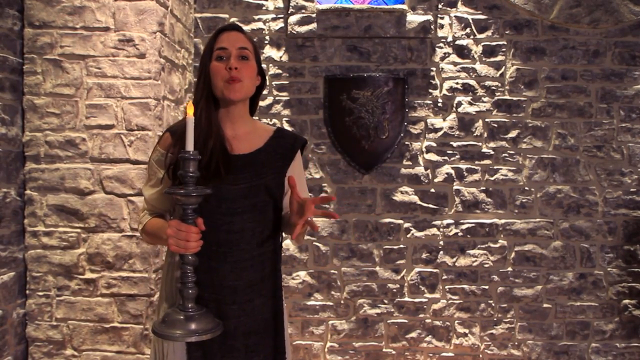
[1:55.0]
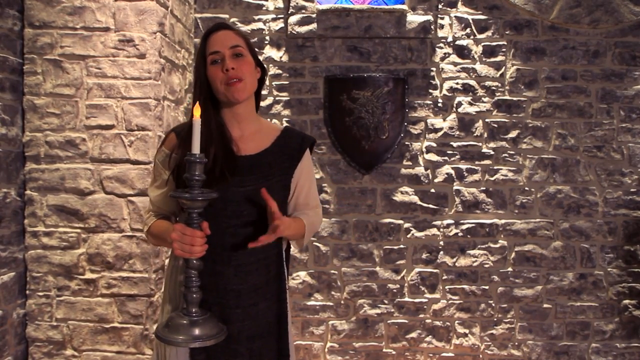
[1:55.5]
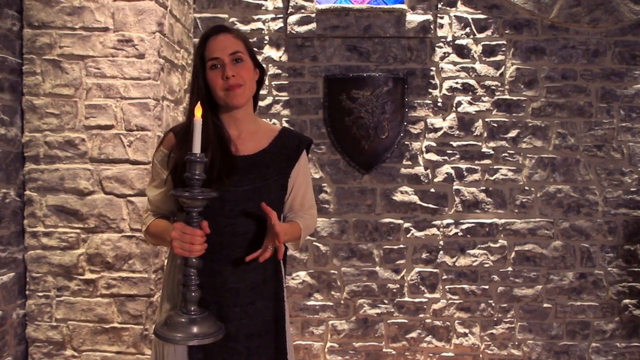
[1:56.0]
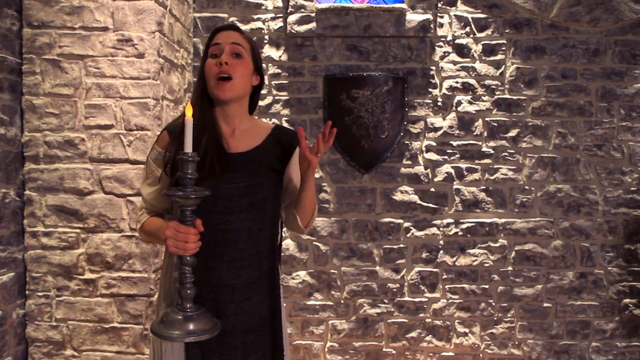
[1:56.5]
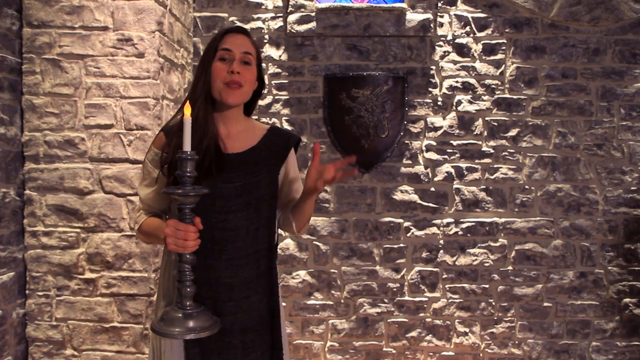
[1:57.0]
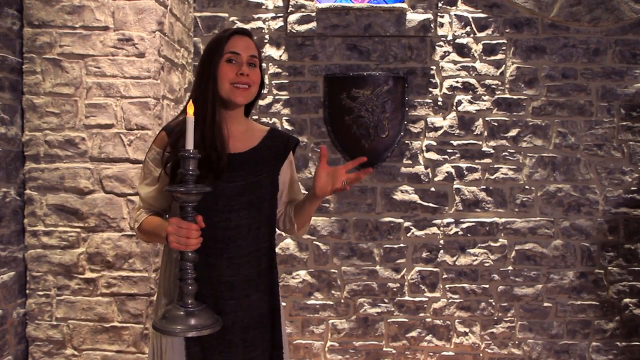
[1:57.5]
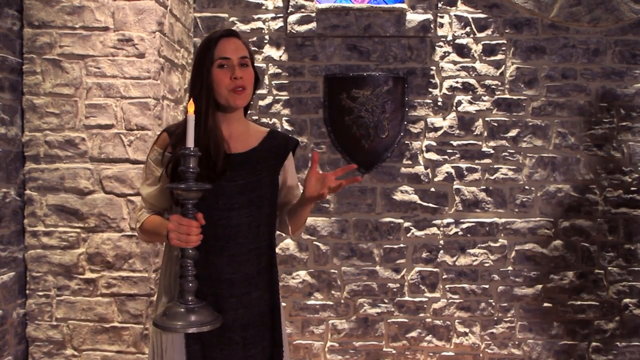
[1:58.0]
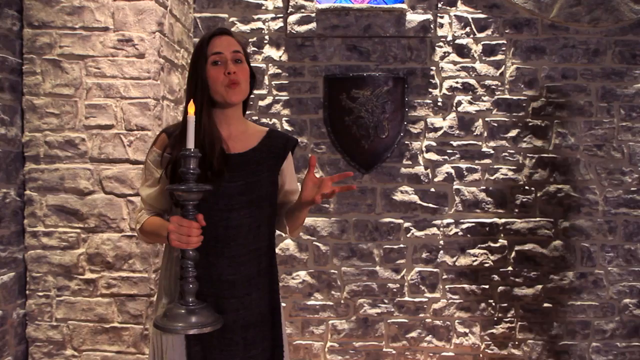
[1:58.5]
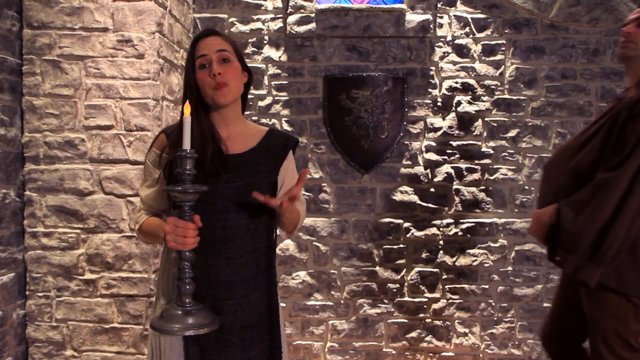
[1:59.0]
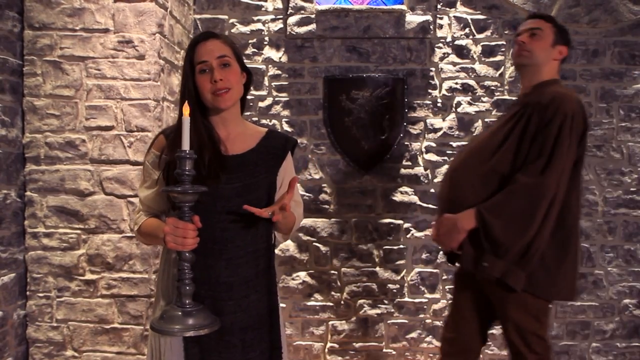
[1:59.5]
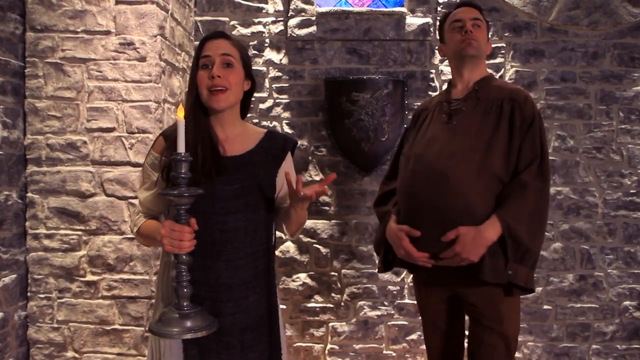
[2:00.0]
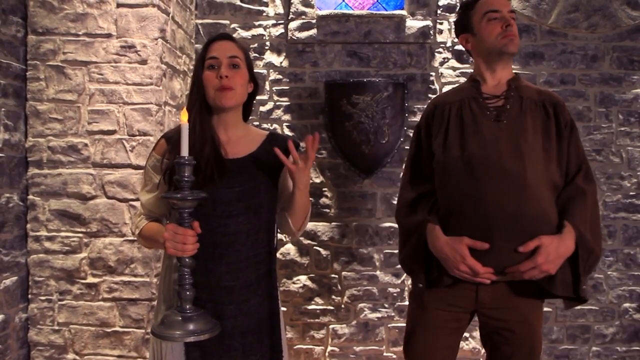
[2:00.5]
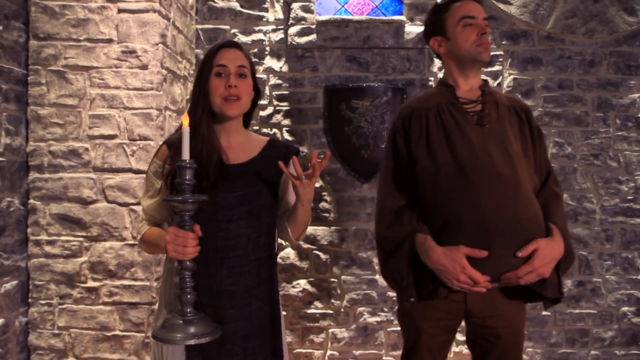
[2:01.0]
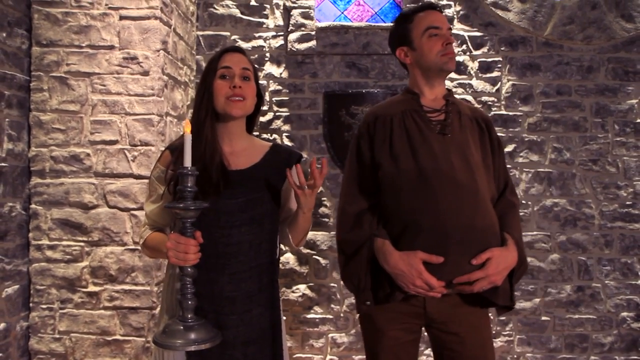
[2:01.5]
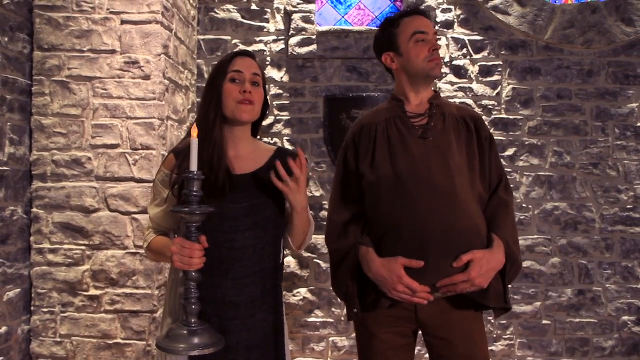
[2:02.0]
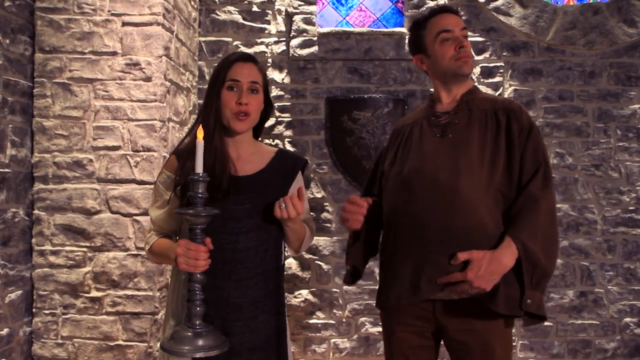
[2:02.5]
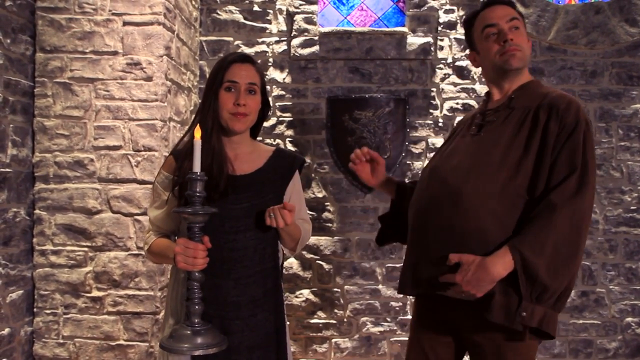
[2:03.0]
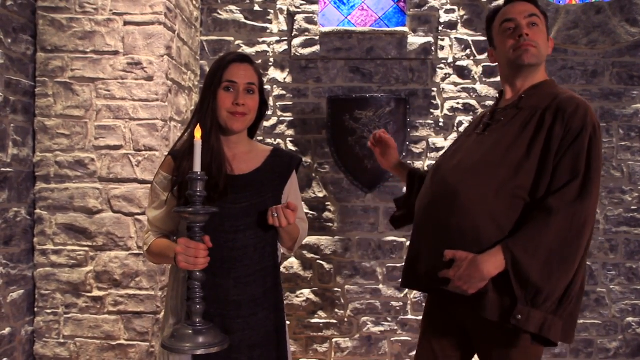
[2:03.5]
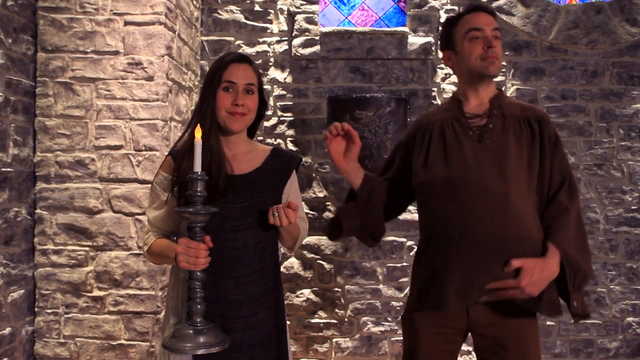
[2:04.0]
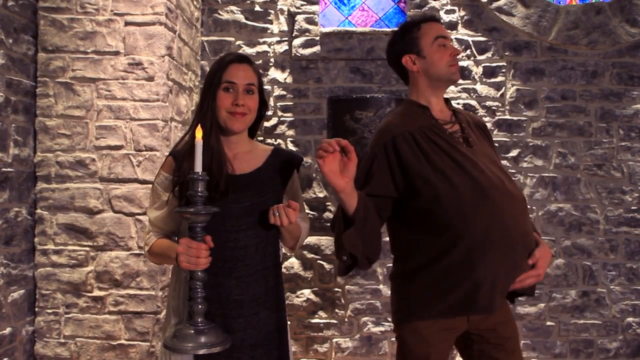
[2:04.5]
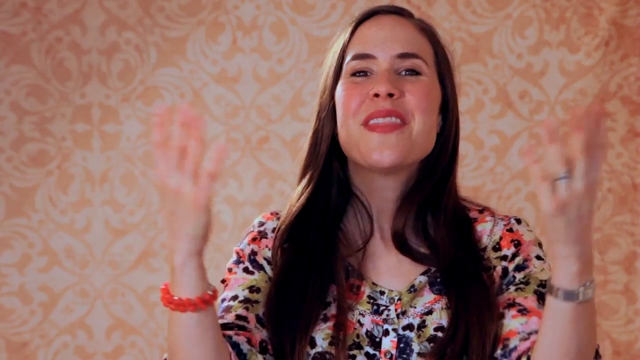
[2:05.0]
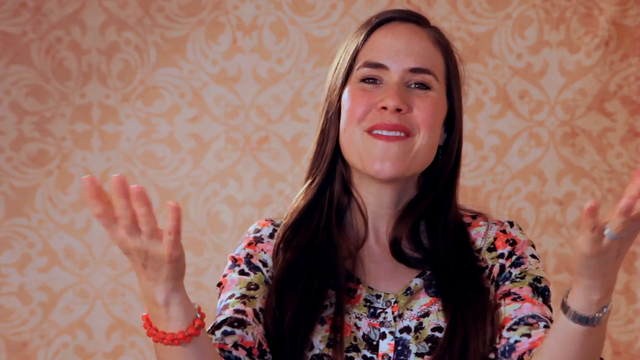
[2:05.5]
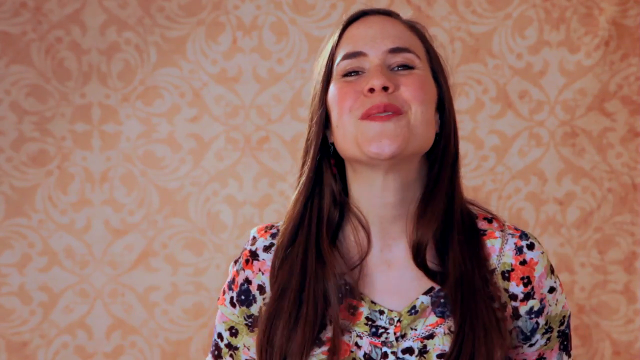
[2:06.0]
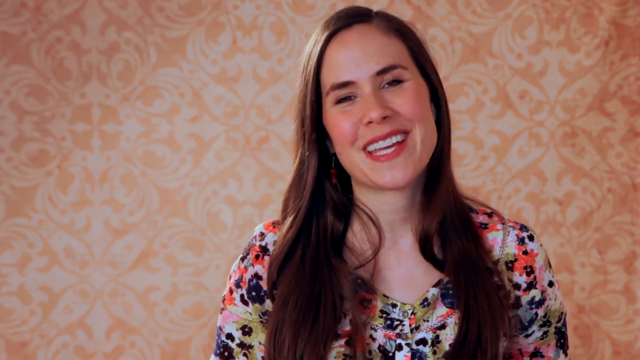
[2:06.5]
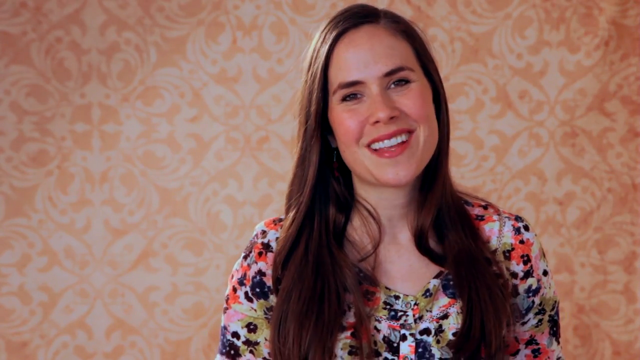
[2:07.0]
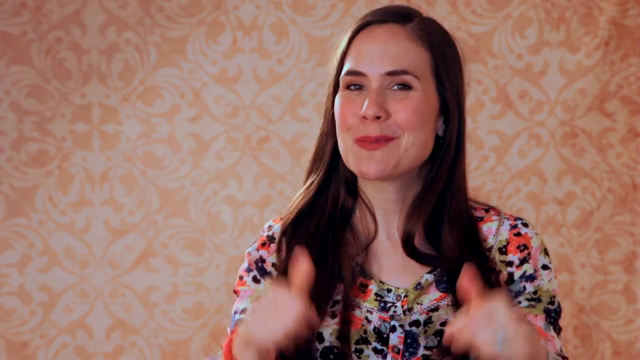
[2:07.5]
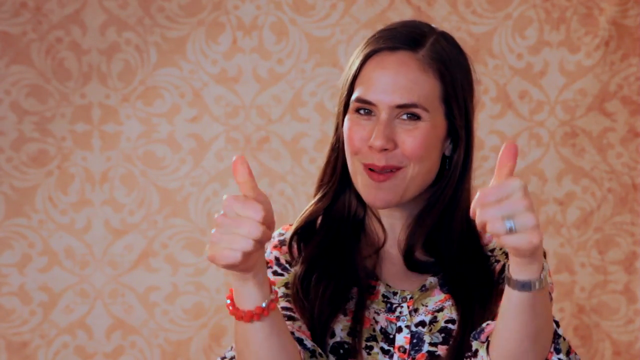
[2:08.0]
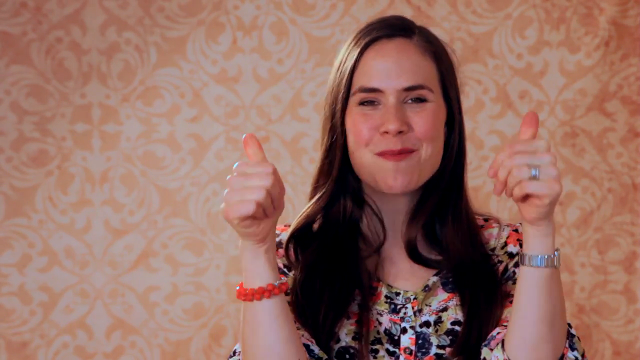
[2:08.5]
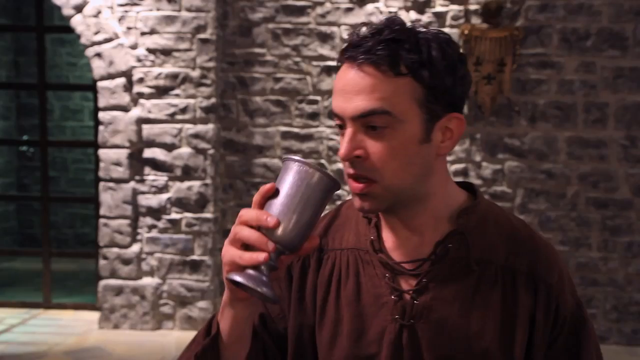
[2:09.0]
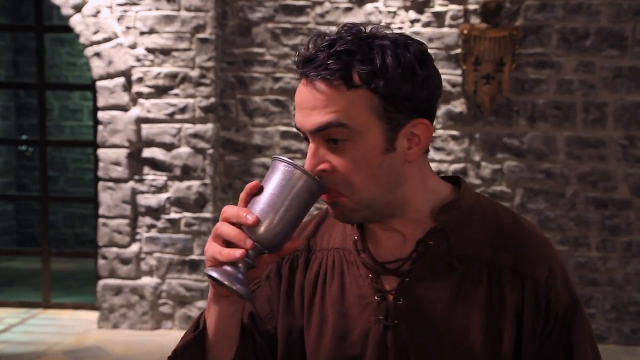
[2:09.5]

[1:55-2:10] The woman stands in the castle room with a stone wall, holding the candle and gesturing, when a man walks in: the man in the peasant outfit who was eating the apple. He has a fat stomach and holds it, sort of dances up and down and puts his hand up, looking happy as she talks. The video then cuts to the woman in the floral outfit with the modern wallpaper design behind her, talking at the camera and smiling; she wears a bracelet, makes other hand gestures and puts up both hands in a thumbs-up. Then comes the man who was smelling the goblet and looking away, in what looks to be the same shot of him disliking the smell of its contents.